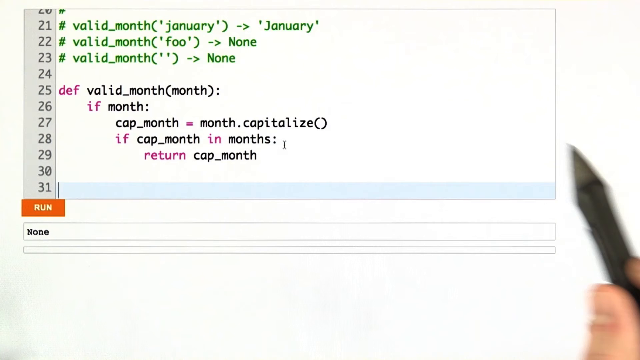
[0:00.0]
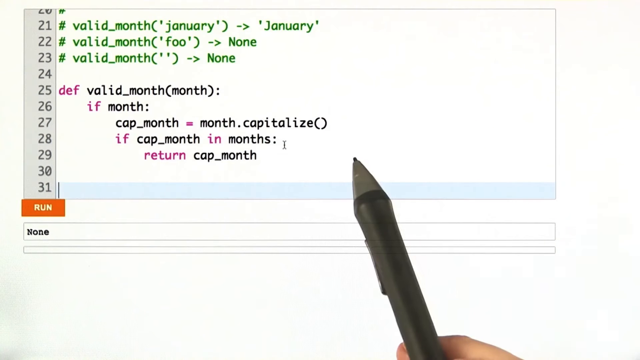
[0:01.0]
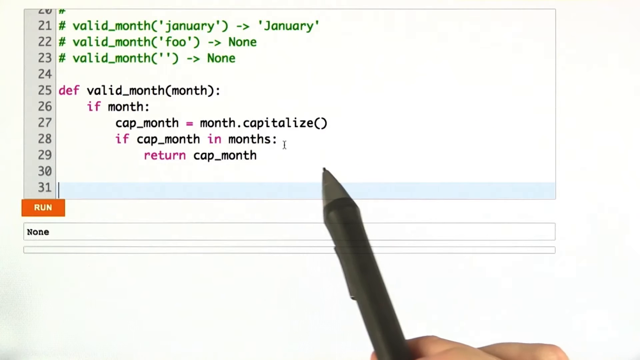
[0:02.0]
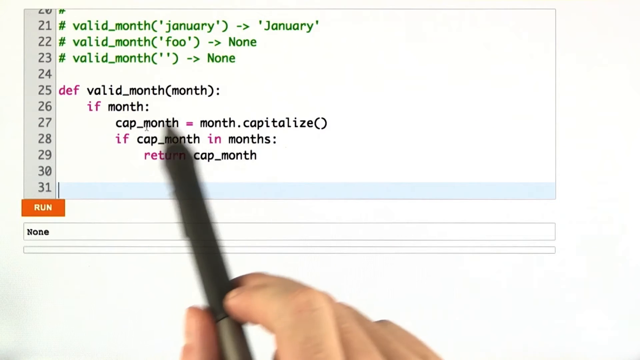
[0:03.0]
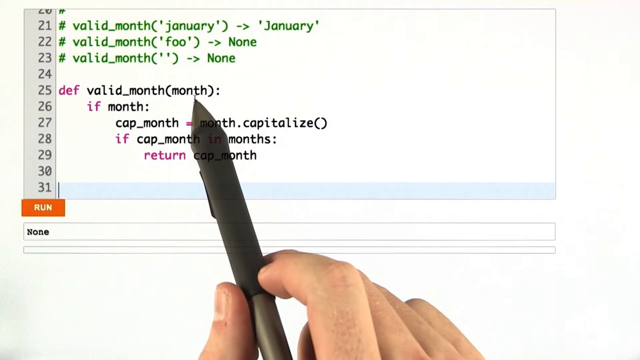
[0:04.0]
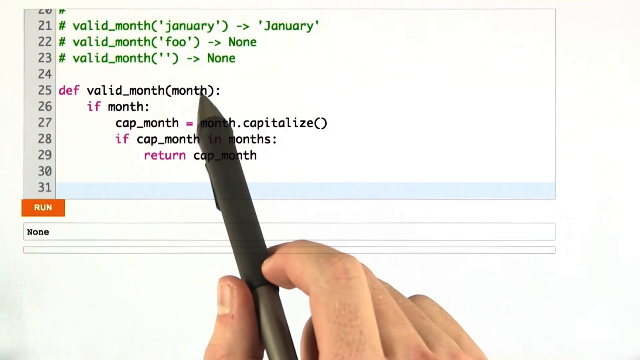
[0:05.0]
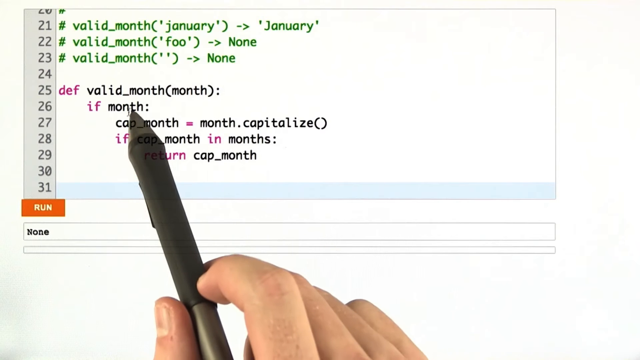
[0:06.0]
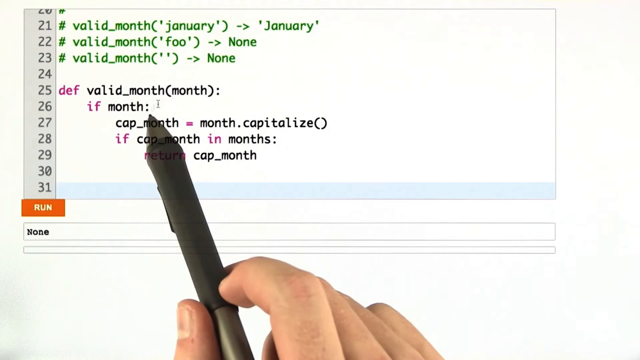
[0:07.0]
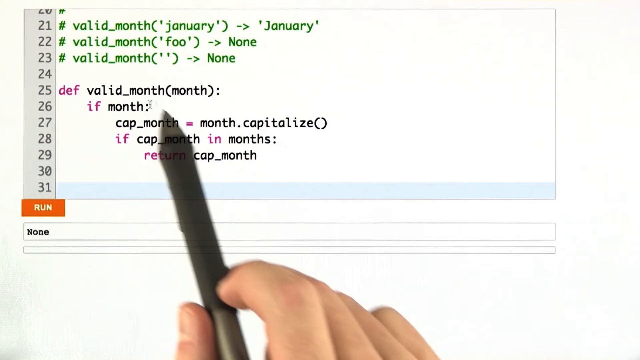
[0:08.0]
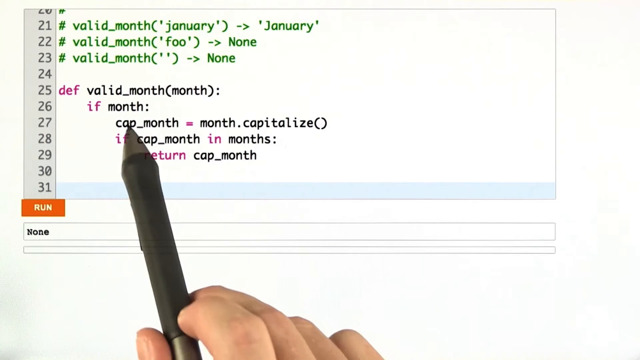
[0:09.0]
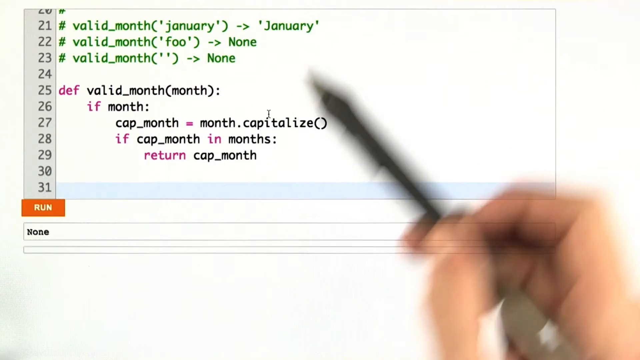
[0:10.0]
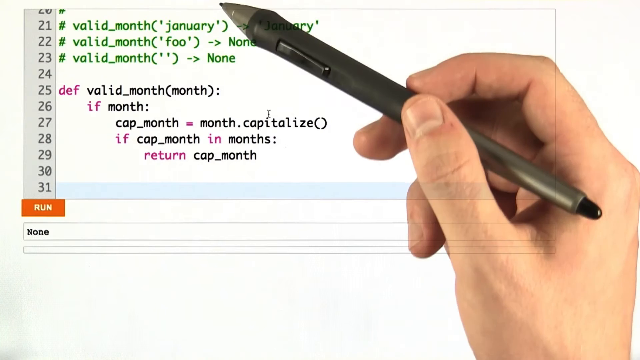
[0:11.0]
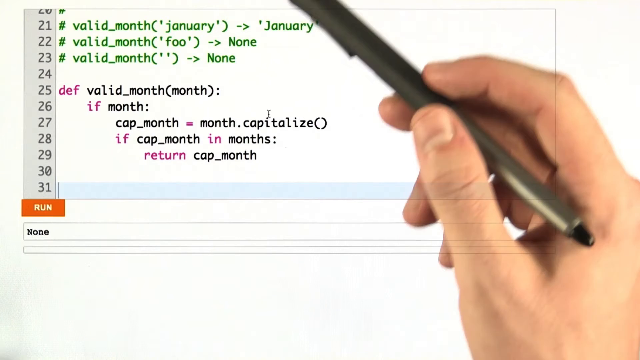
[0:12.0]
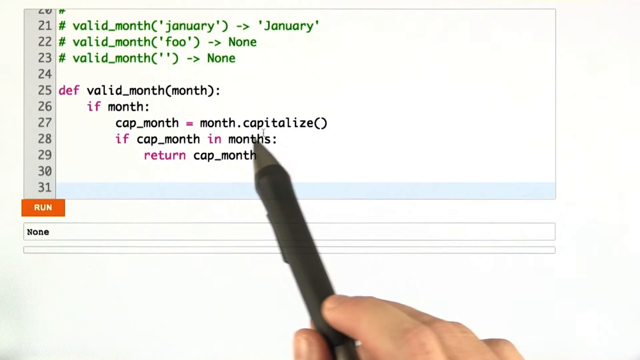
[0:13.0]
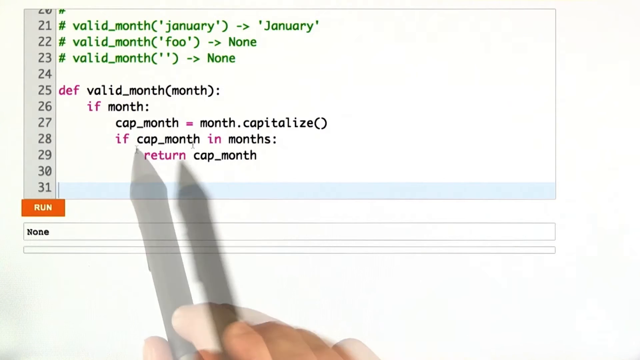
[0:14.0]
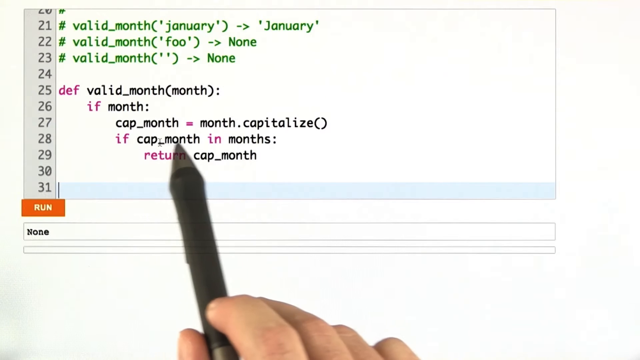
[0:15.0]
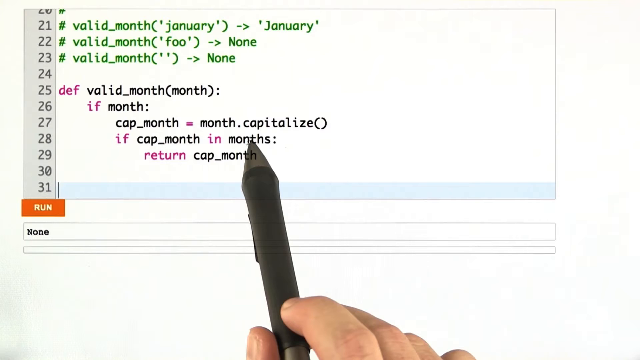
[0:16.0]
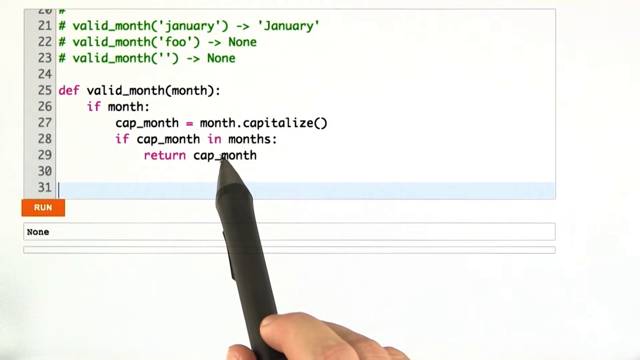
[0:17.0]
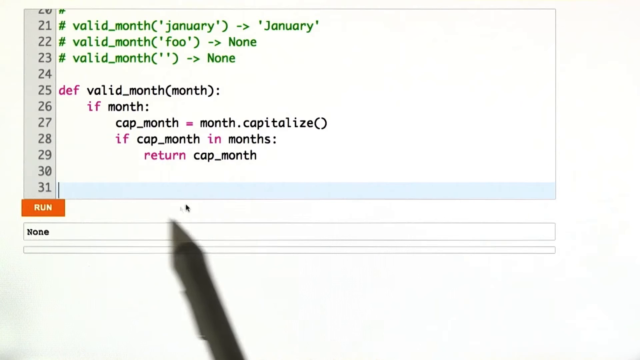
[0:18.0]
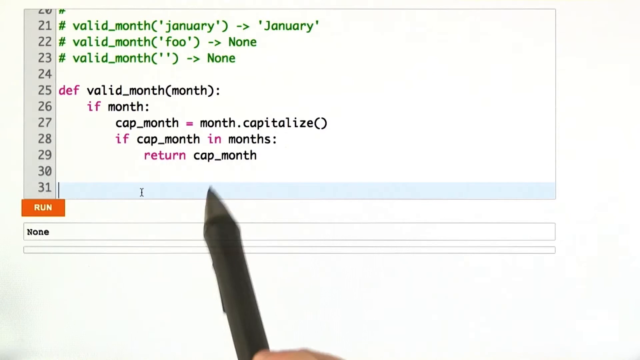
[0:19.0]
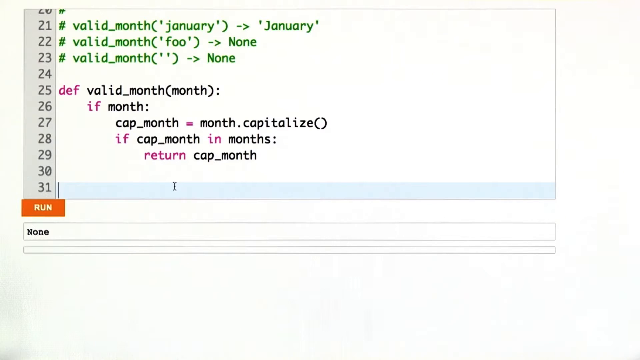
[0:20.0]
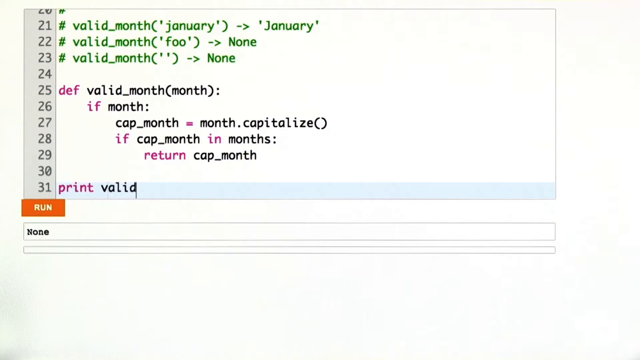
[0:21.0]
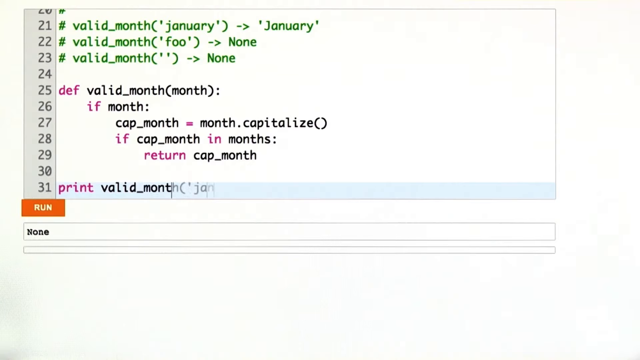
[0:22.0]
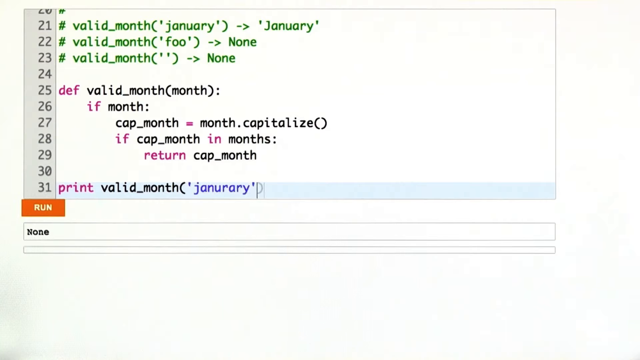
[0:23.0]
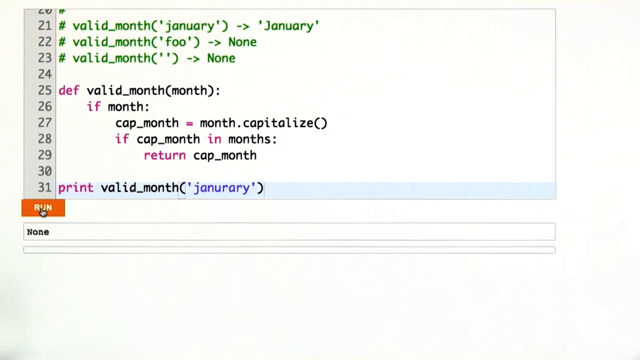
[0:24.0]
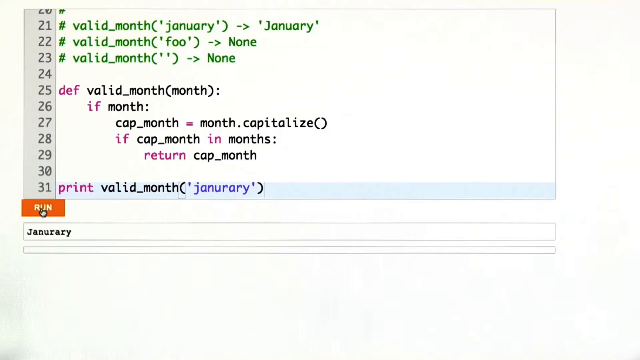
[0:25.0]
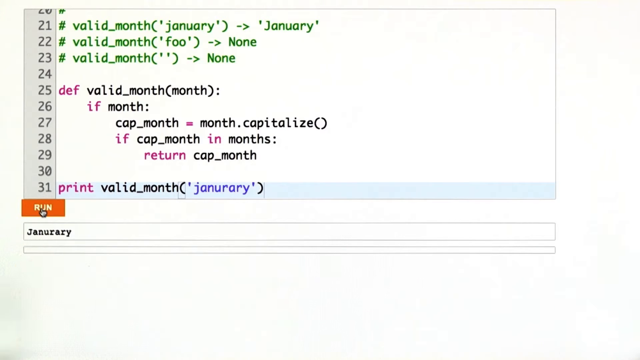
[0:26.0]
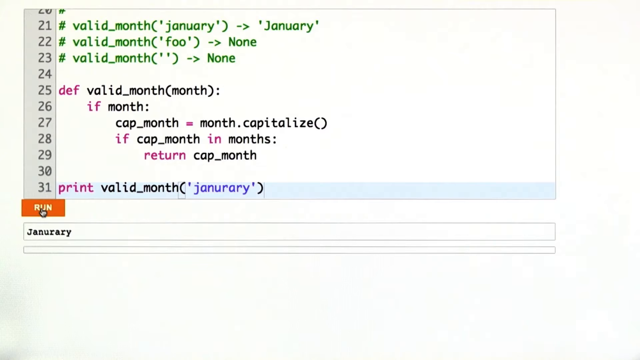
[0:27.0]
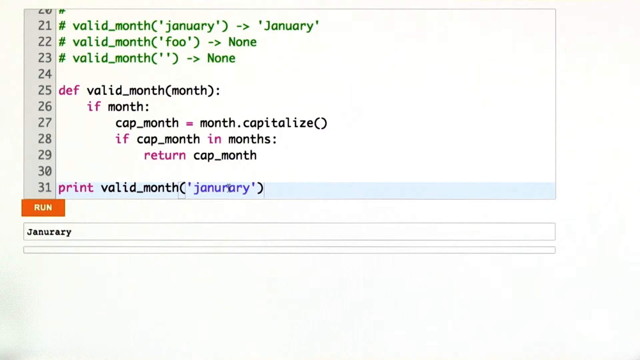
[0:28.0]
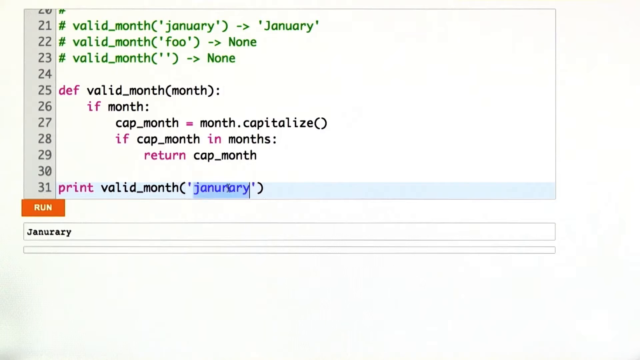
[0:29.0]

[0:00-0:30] A person's hand holds a digital pen over a program that lists the months of the year. The pen moves back and forth, hovering over the words for the months. Text on screen reads "Capital Month Capitalized." The content appears to be some sort of programming concerned with capitals in months. A line reads "print valid month of January"; January is spelled wrong, so it is deleted and replaced with July.